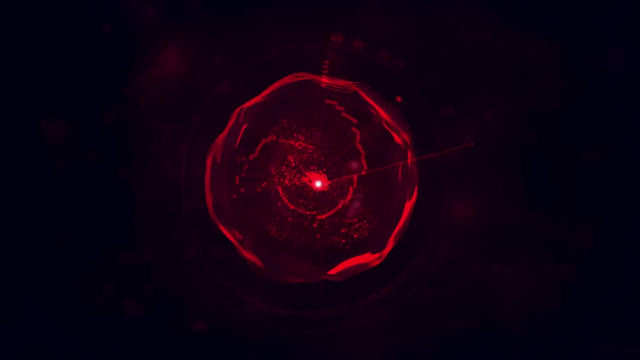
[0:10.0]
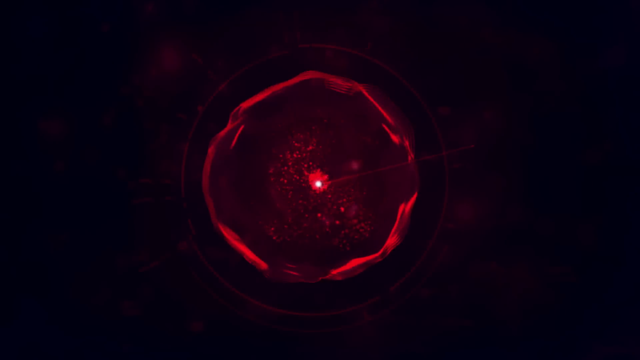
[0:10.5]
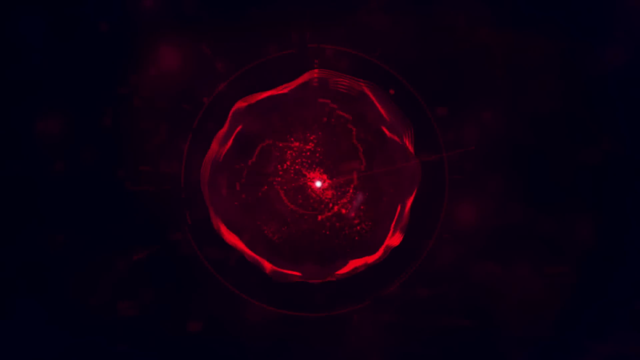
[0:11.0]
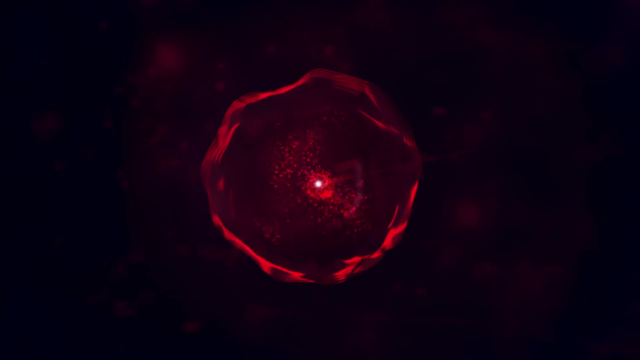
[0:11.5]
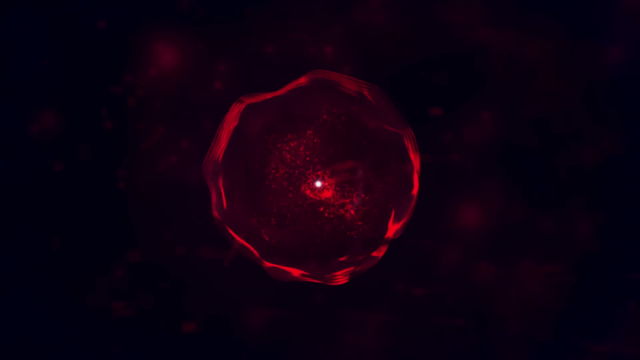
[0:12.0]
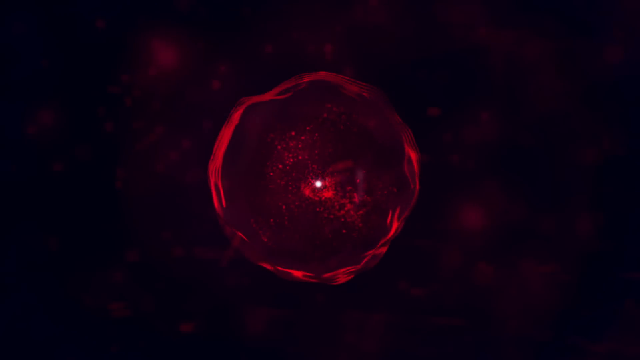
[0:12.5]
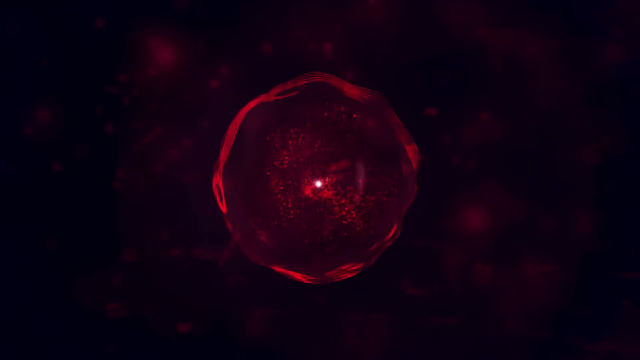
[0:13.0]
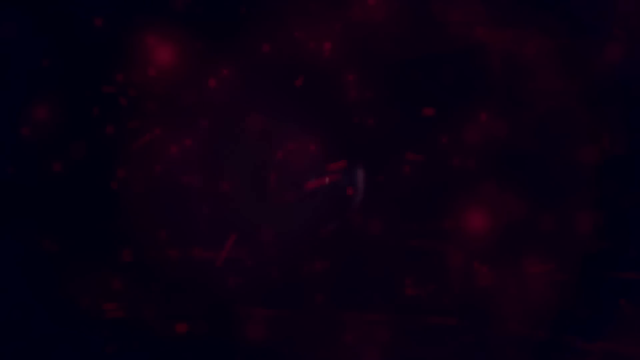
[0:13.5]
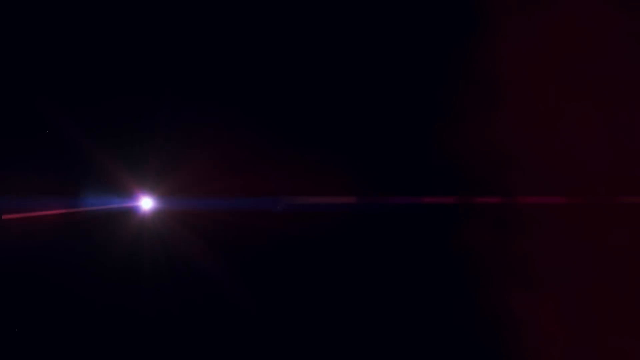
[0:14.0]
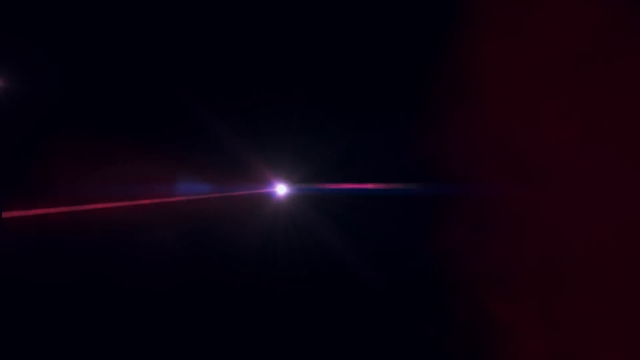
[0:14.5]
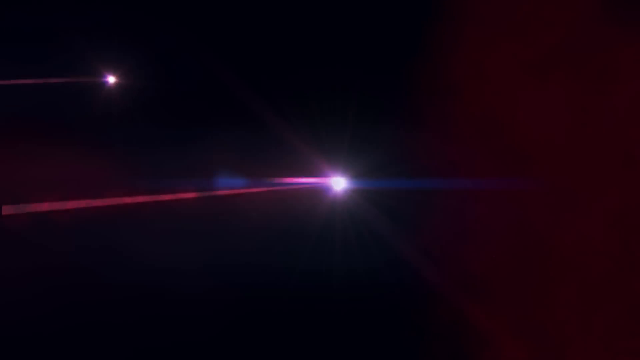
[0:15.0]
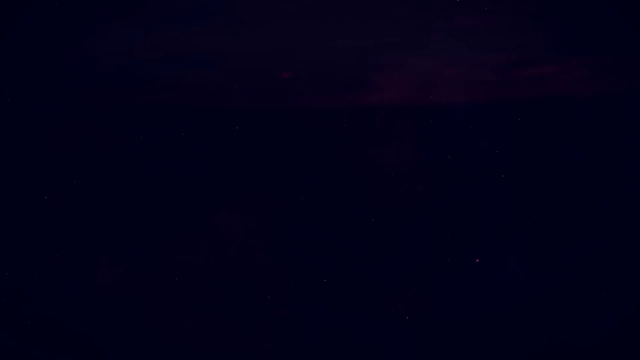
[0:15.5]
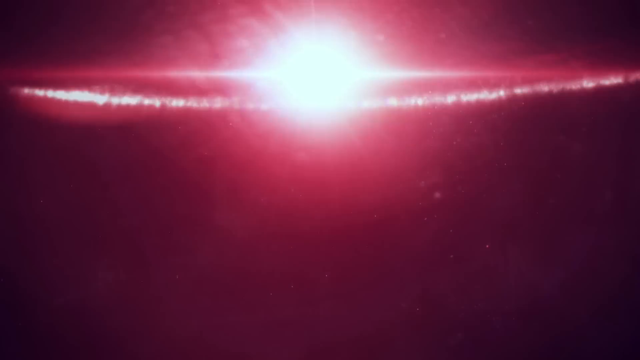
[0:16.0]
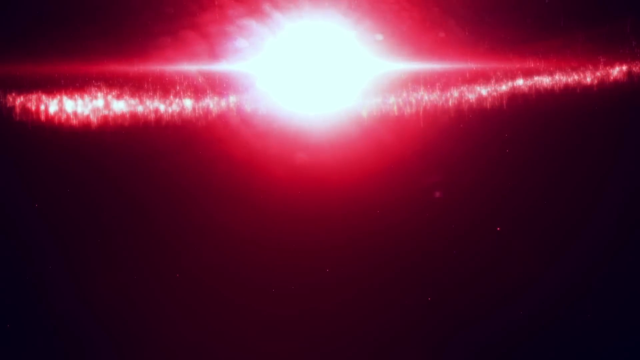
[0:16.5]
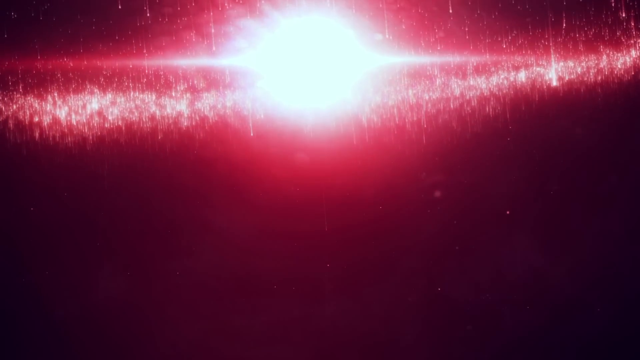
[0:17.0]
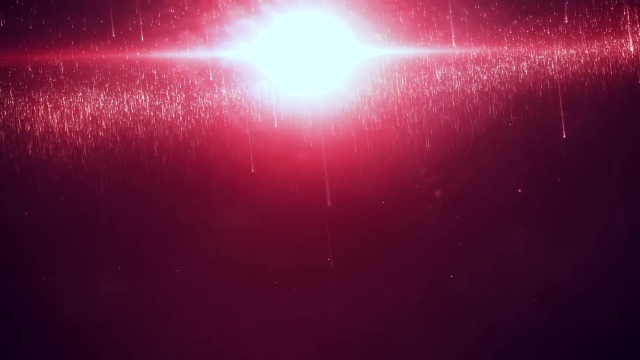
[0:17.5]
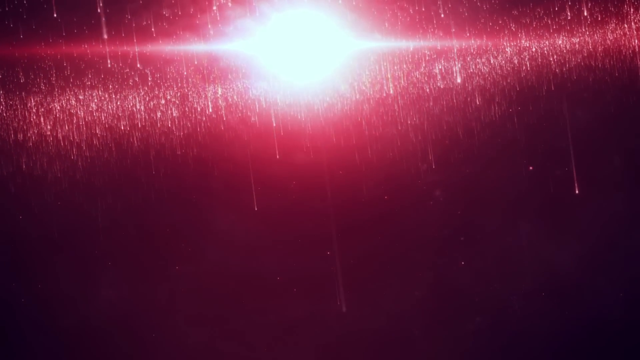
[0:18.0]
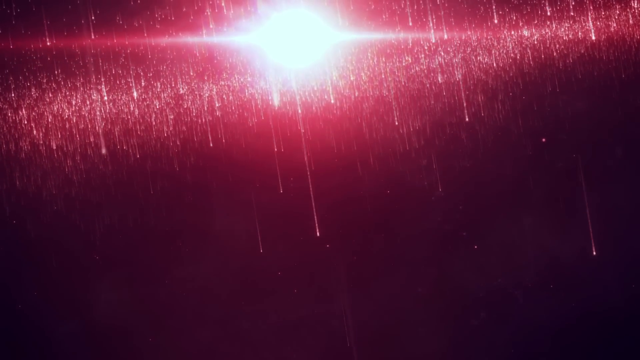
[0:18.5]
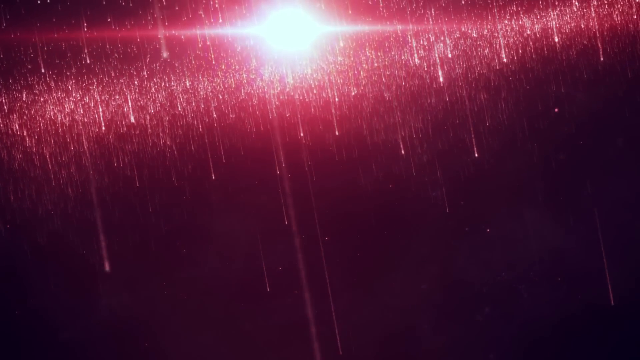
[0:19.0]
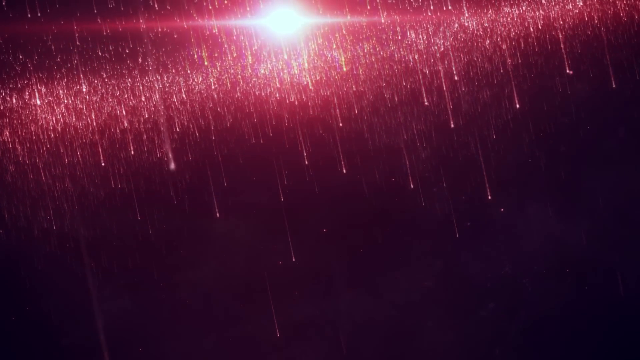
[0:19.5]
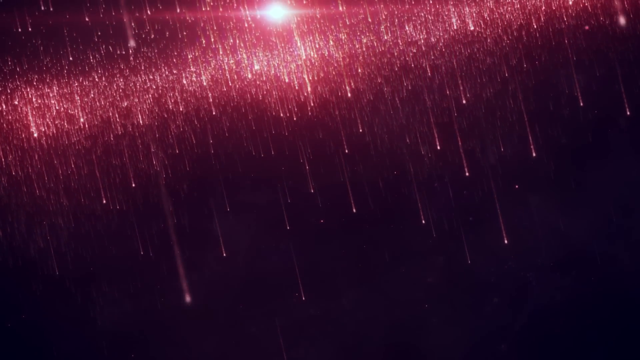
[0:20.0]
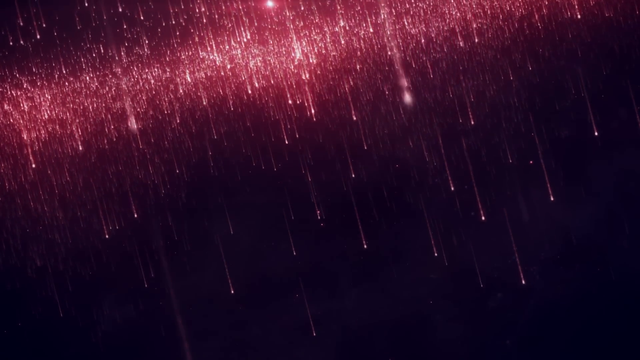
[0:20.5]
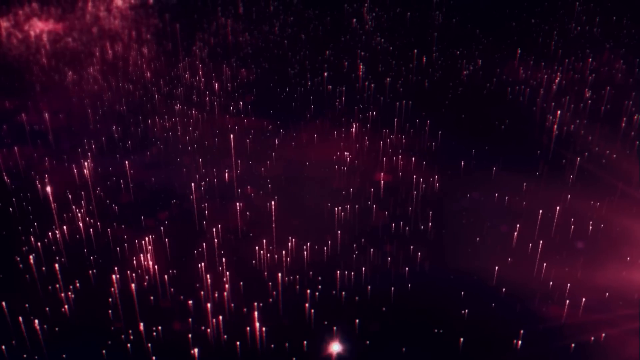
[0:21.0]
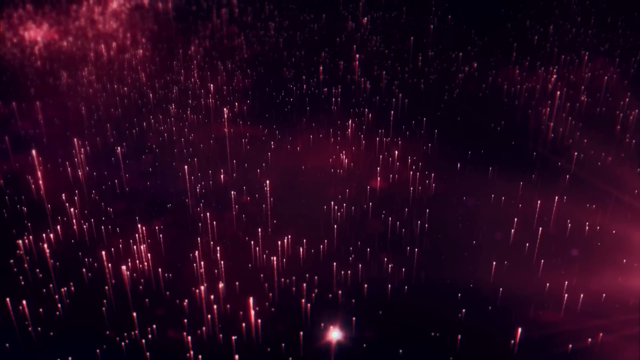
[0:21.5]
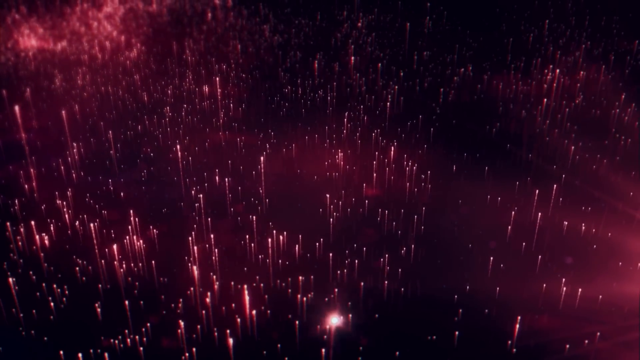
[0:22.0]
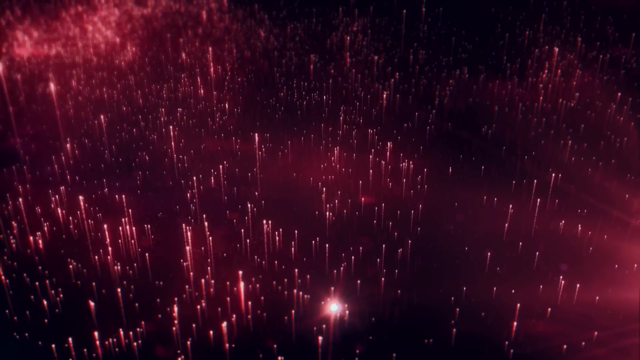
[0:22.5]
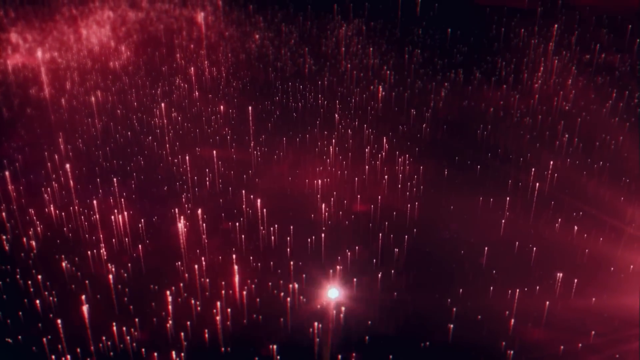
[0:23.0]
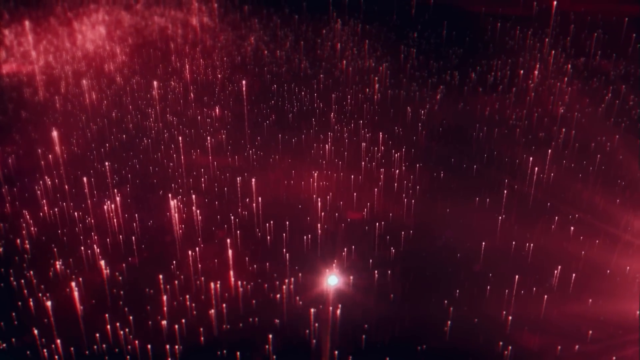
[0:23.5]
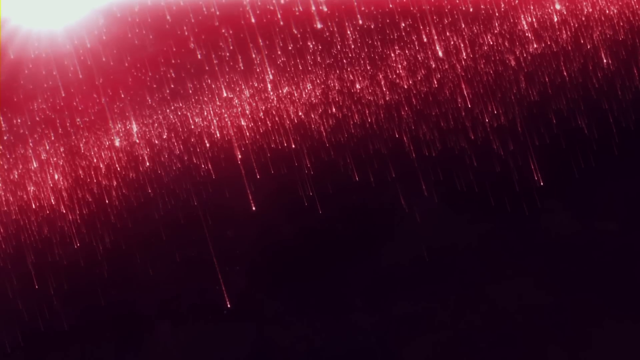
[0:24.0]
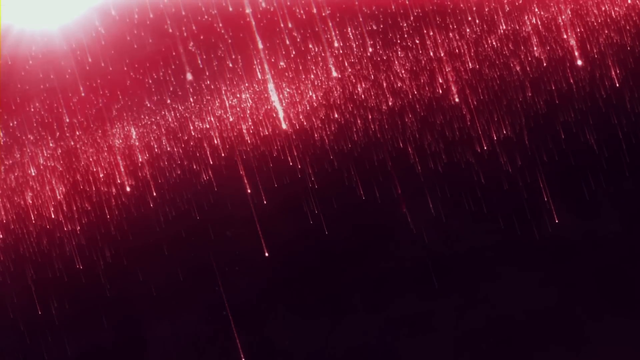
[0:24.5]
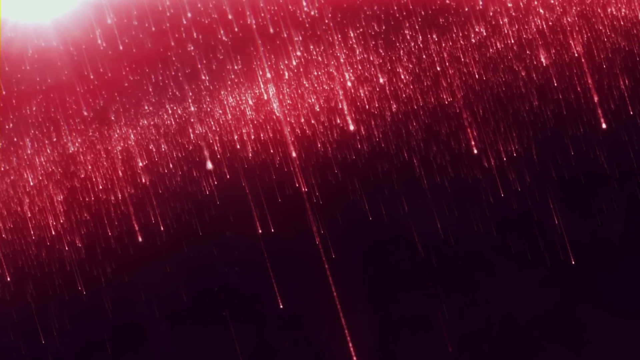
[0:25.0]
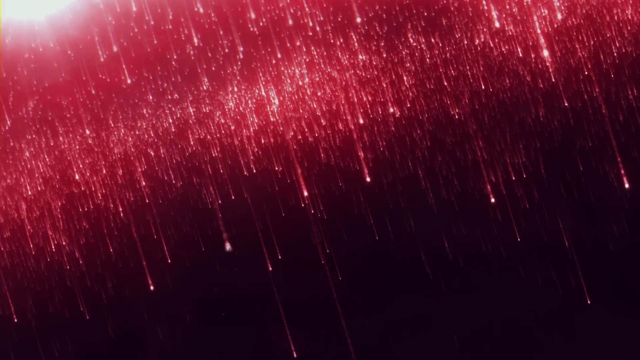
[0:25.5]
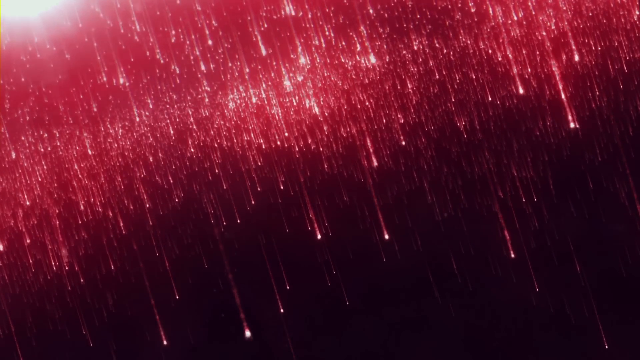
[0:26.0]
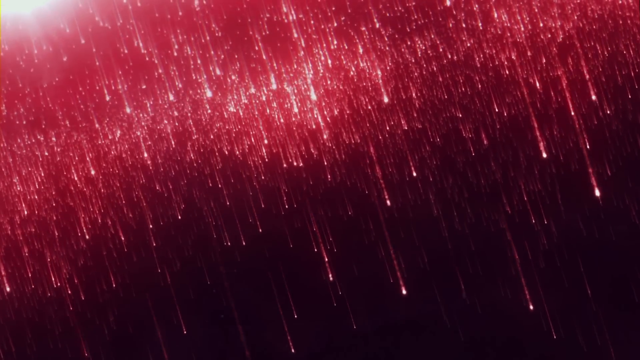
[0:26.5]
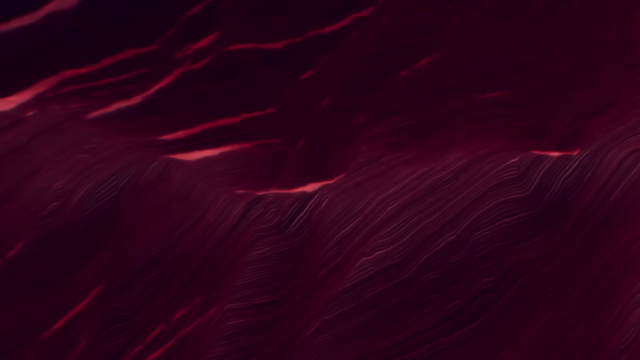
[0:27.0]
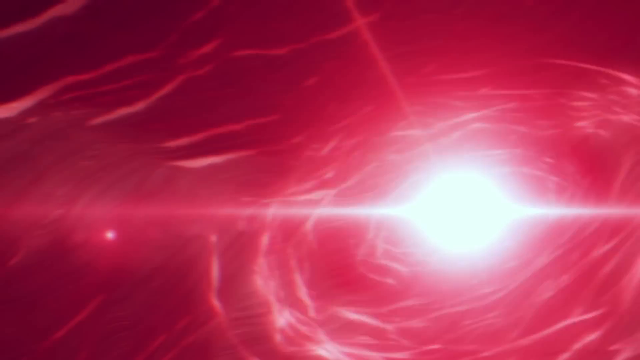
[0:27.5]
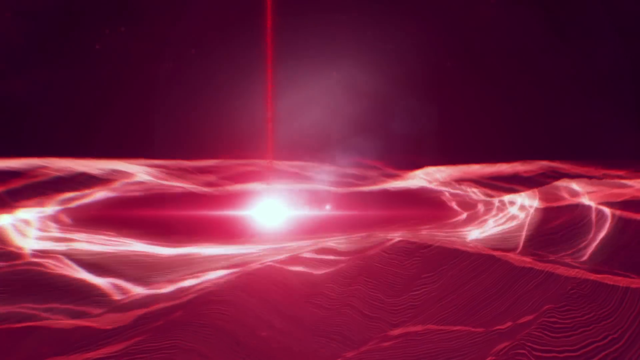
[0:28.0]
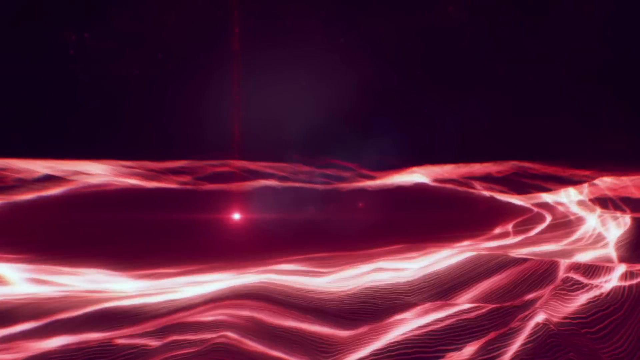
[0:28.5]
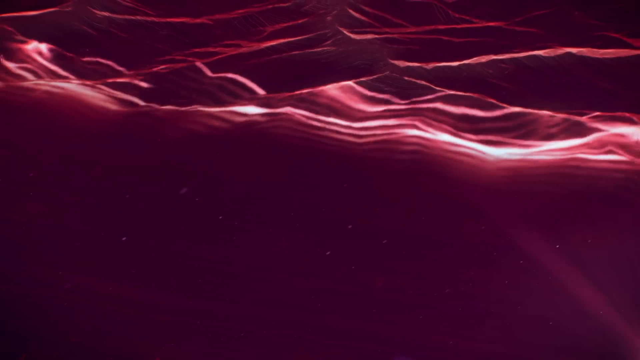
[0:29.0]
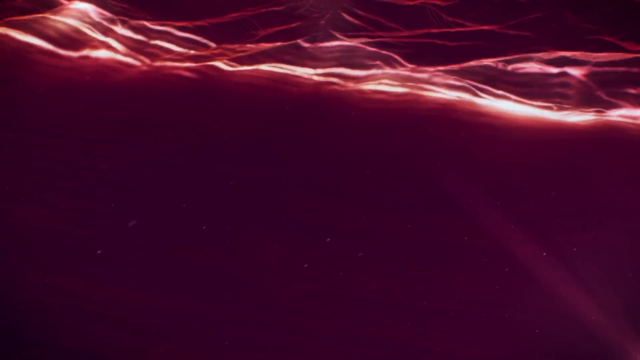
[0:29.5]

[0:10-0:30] Against a black background there is a kind of reddish orb lined in red, with a white dot in the very middle surrounded by red. The orb almost looks like it is moving, warping and changing. Two white lights go shooting toward the right, and then there is a glowing big ball kind of at the upper middle. It looks like kind of waves going through something like water. Everything is a kind of reddish color, with a little pink or burgundy as well.